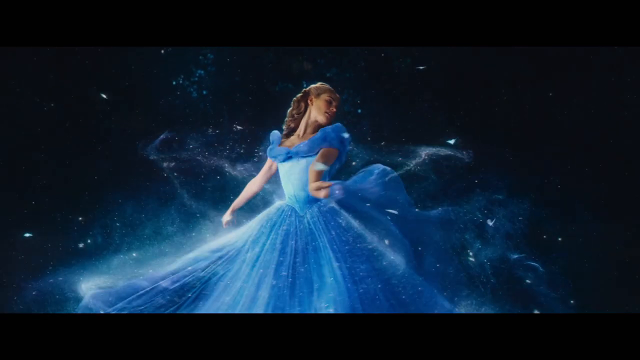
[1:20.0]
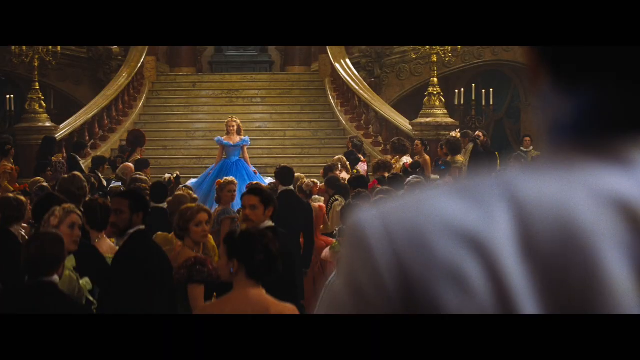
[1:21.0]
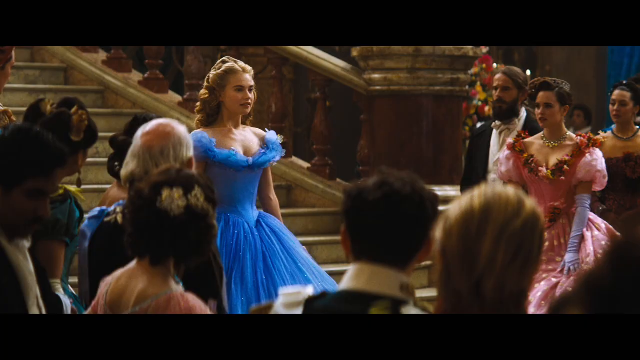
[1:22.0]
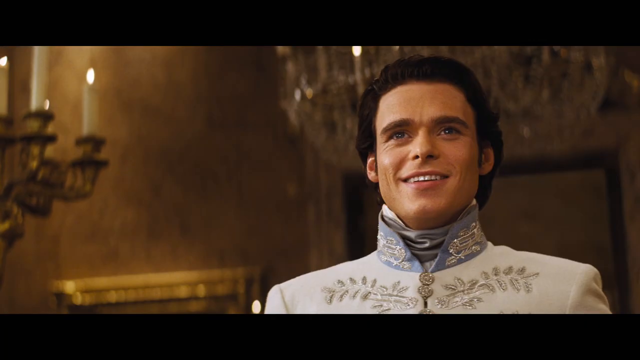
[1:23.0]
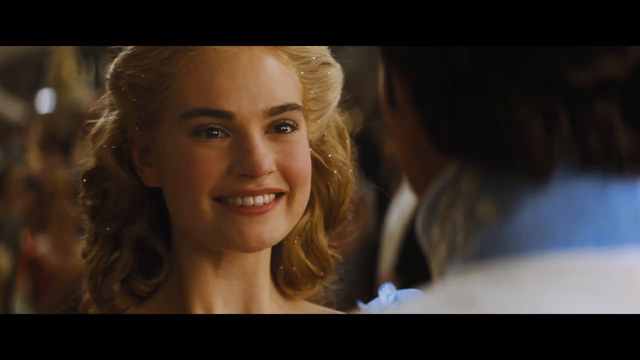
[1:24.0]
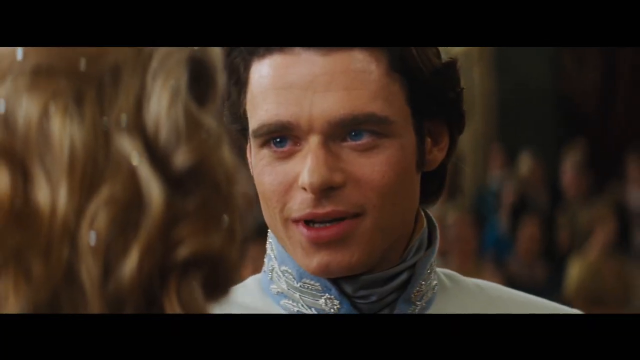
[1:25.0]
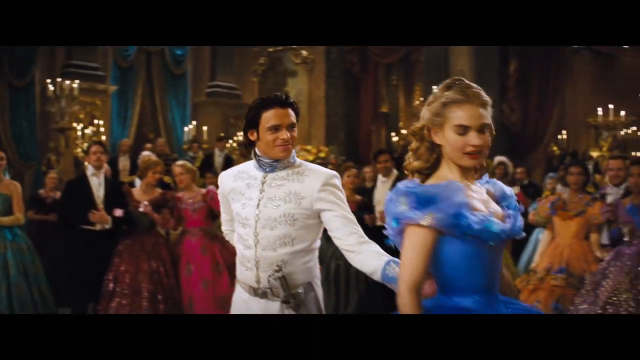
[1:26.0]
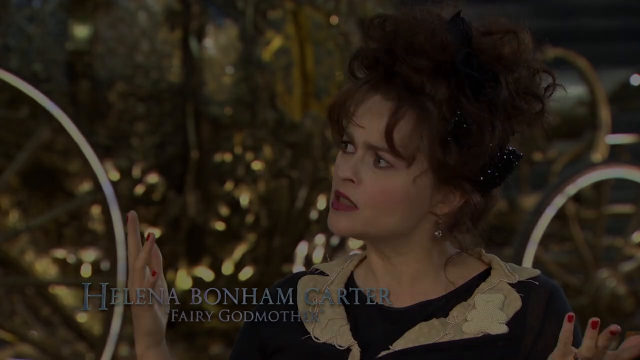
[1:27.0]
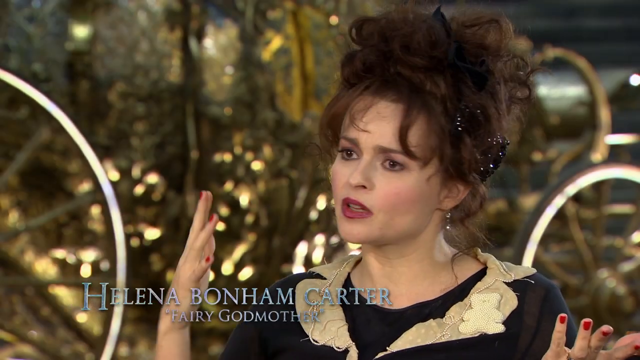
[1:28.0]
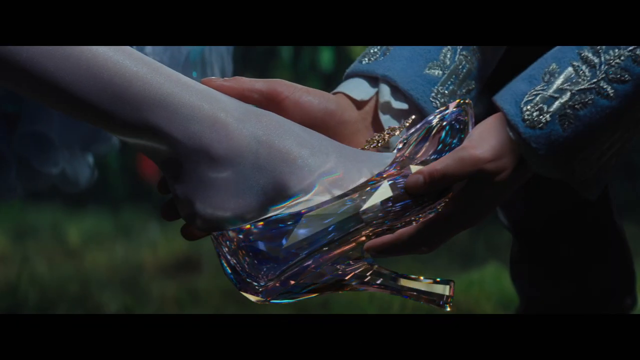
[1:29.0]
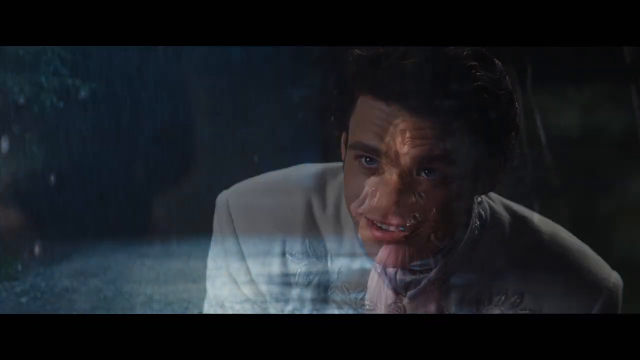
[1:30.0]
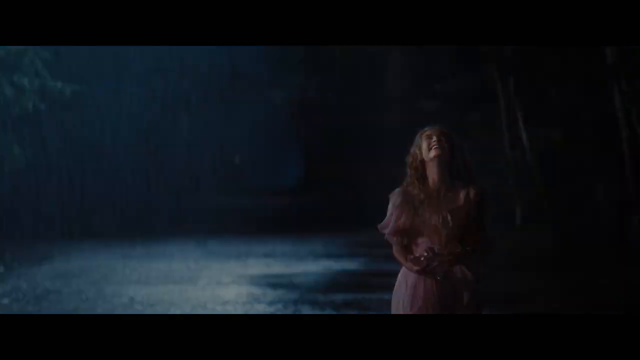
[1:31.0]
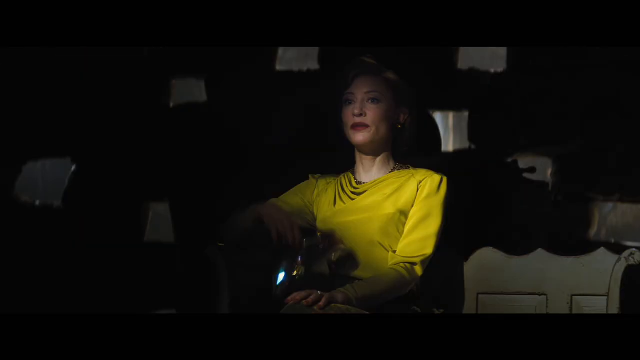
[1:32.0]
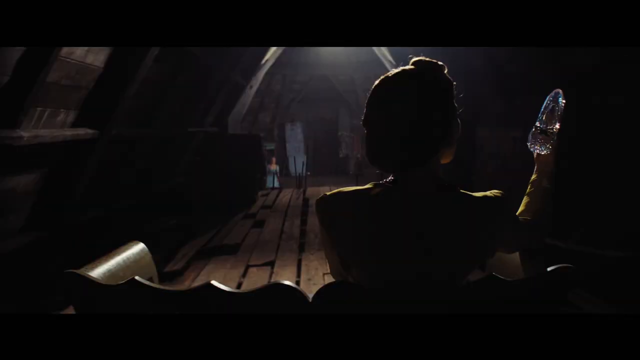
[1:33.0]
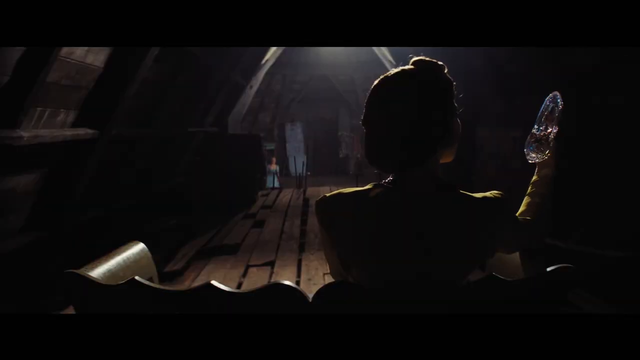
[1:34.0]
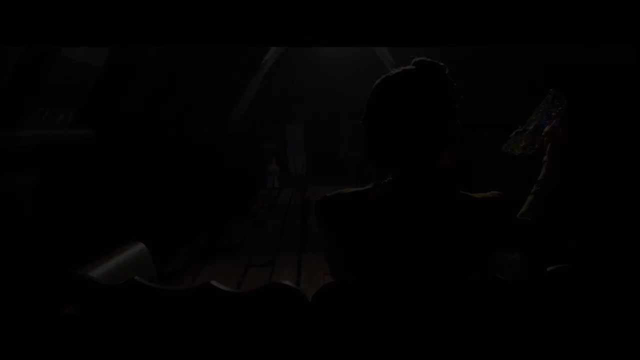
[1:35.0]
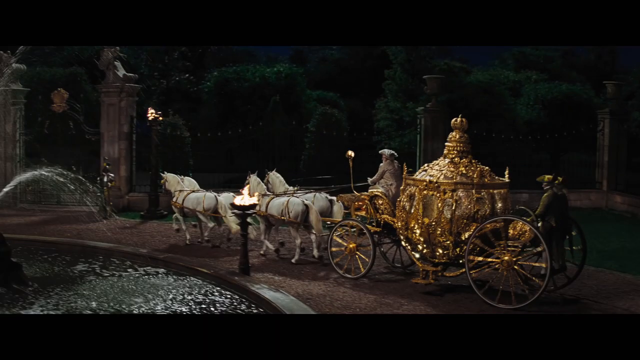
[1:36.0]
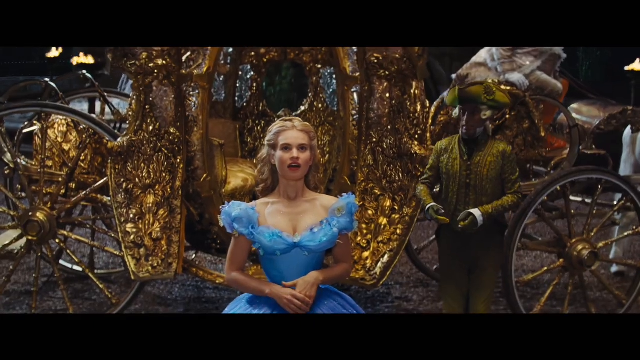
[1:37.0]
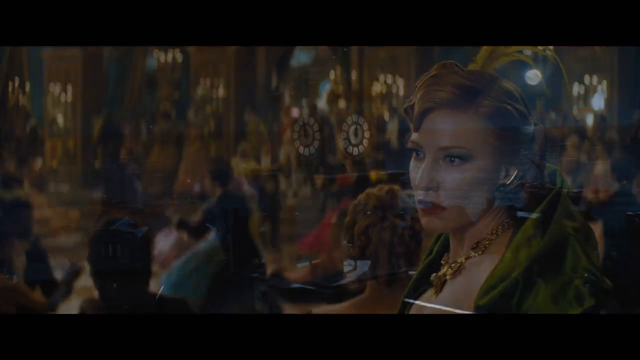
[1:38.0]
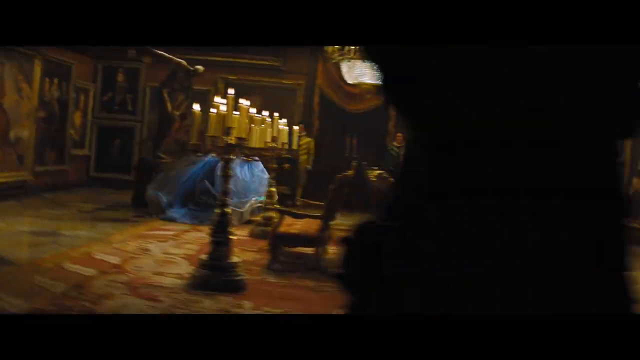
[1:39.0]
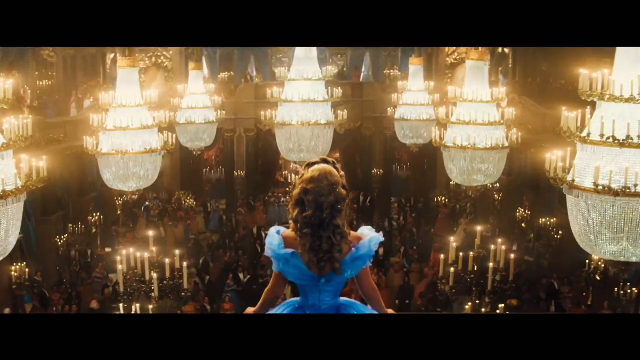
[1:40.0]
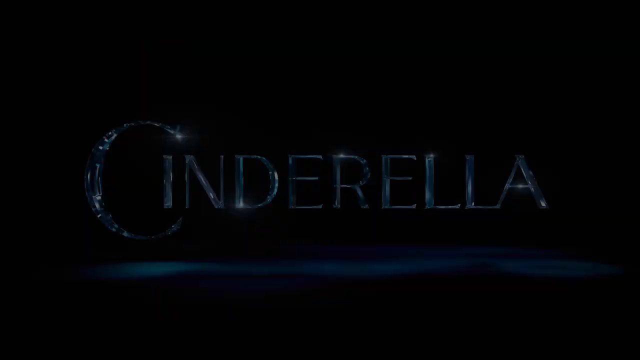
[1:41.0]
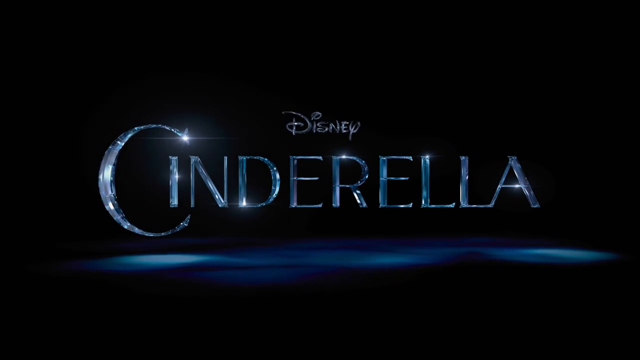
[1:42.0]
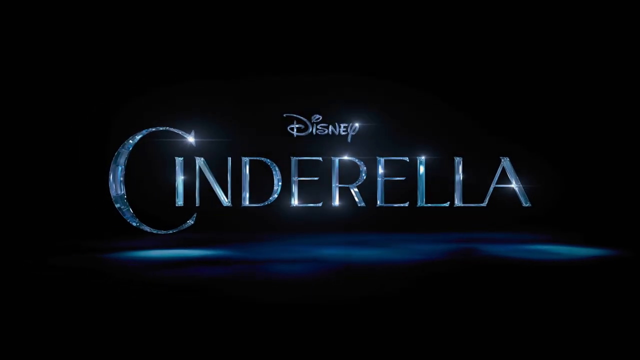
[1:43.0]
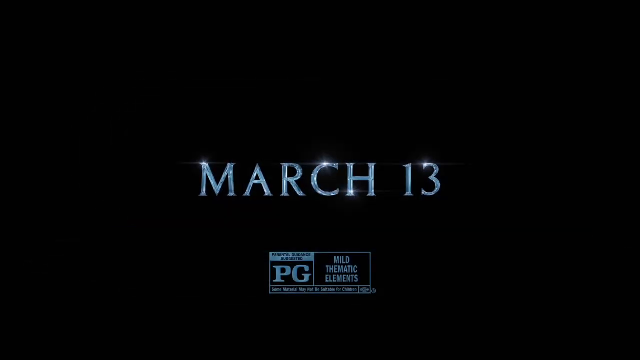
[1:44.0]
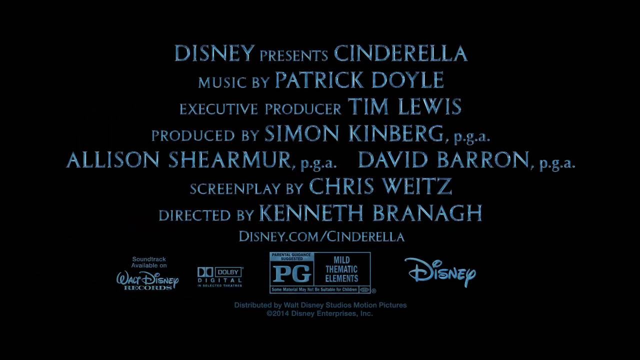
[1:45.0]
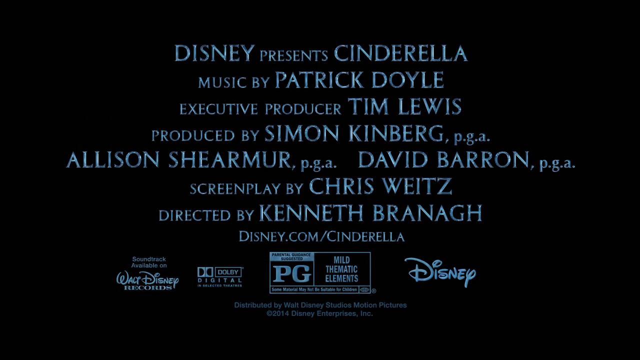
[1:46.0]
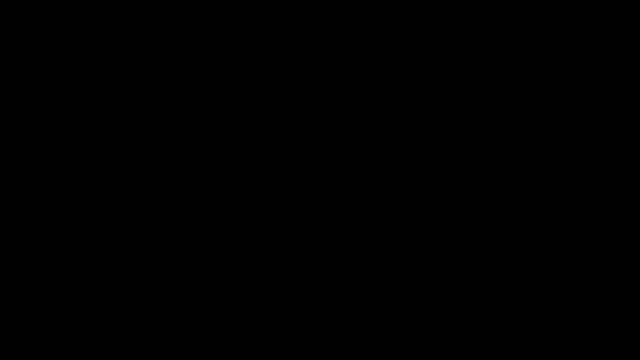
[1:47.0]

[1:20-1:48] Cinderella, dressed in the most beautiful gown, goes to the ball organized by the prince, where she meets and dances with him. The prince talks to her, but she leaves quickly in a golden chariot, leaving a glass shoe behind. The ballroom is filled with many people, and has grand stairs and many golden chandeliers. People are watching her. She then goes back to her poor life, serving her stepmother and stepsisters.